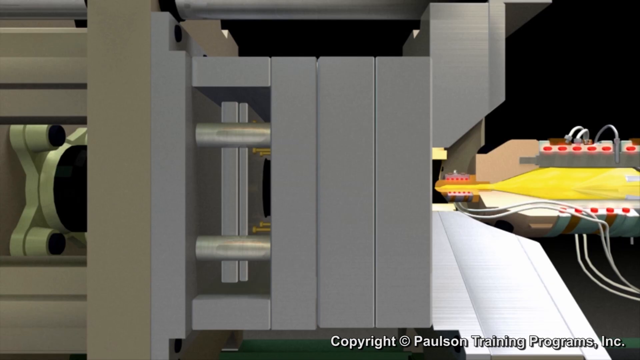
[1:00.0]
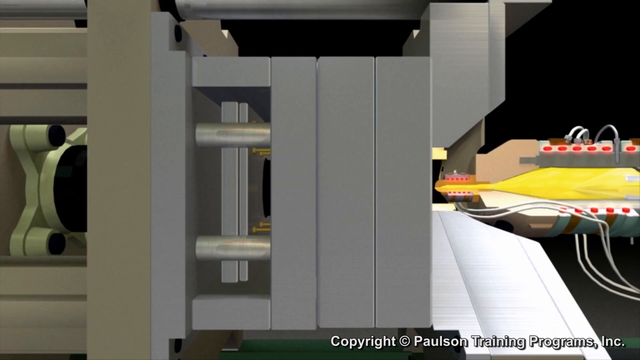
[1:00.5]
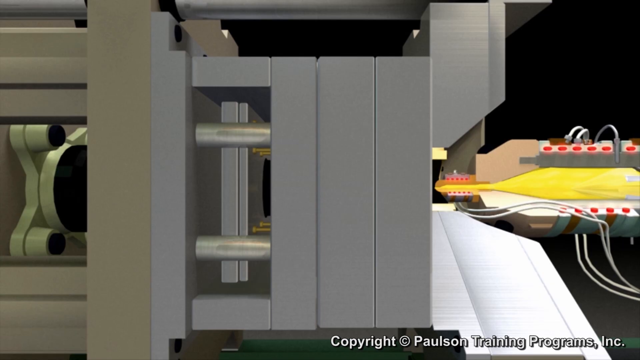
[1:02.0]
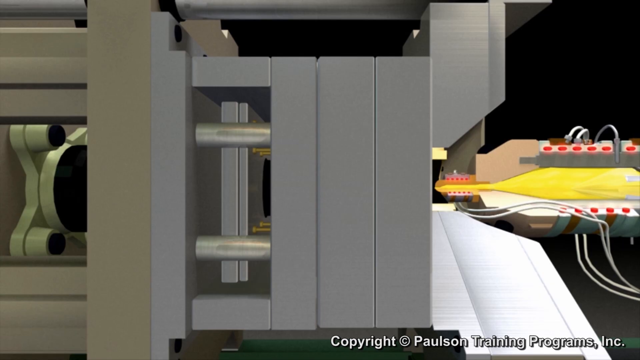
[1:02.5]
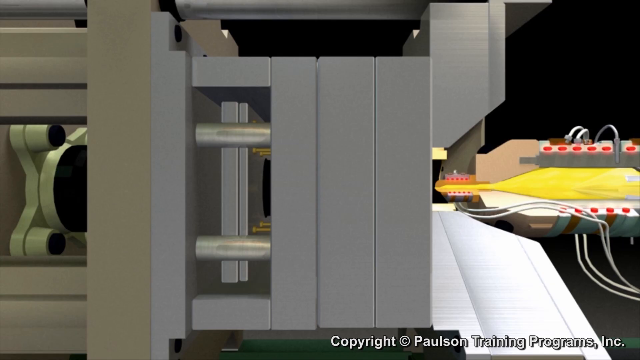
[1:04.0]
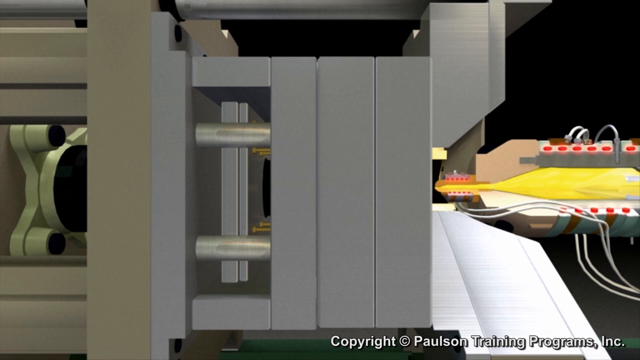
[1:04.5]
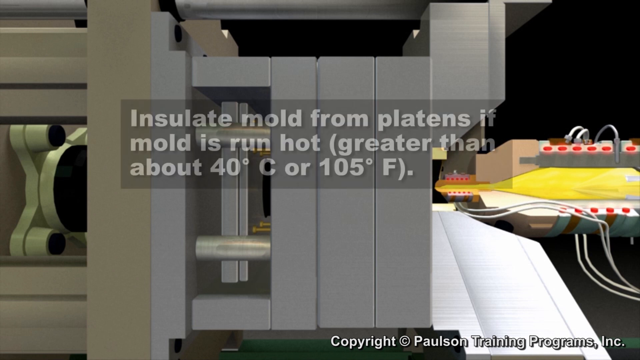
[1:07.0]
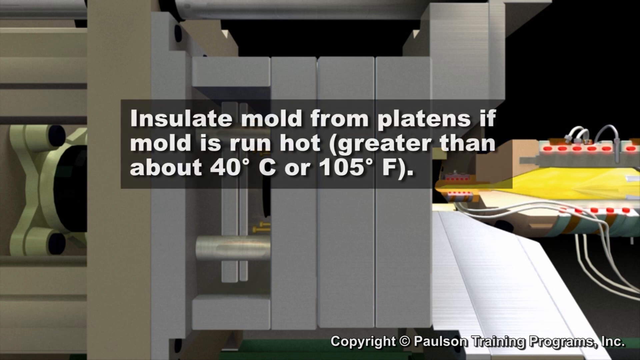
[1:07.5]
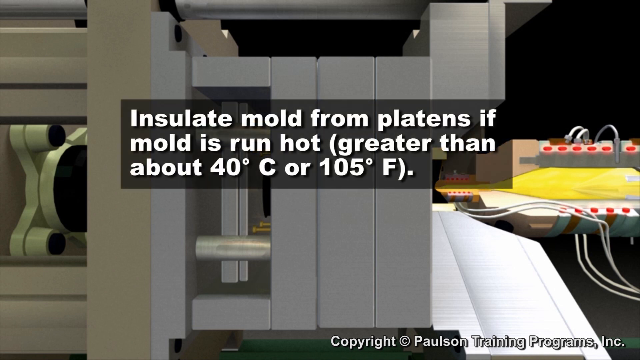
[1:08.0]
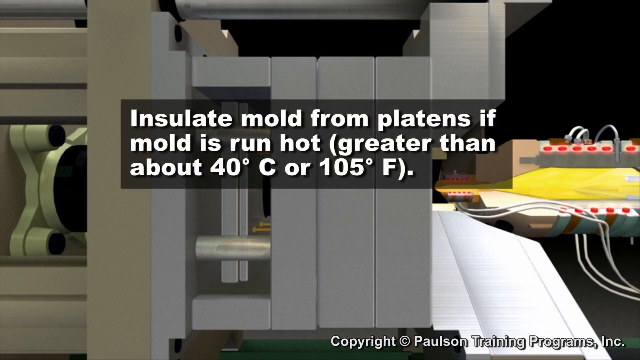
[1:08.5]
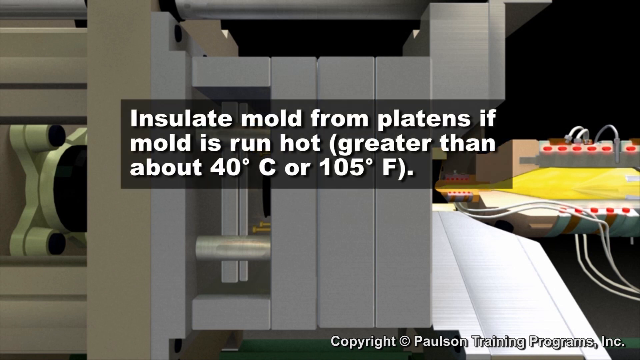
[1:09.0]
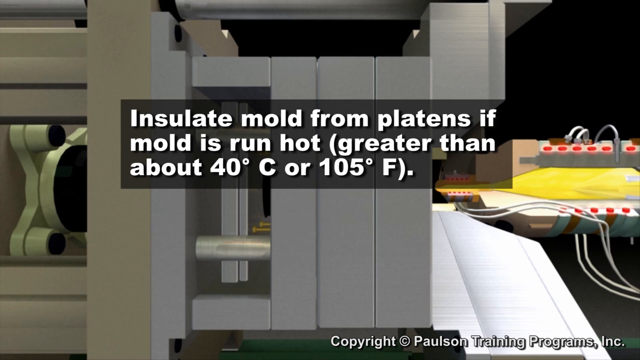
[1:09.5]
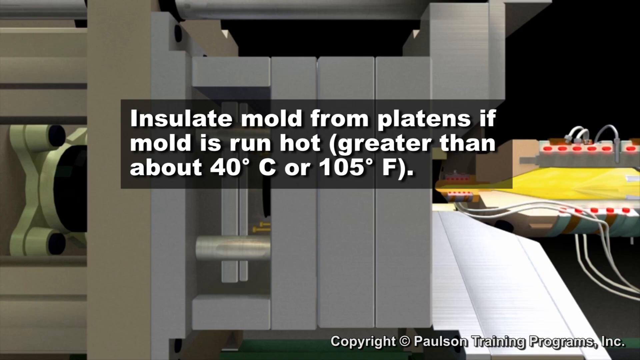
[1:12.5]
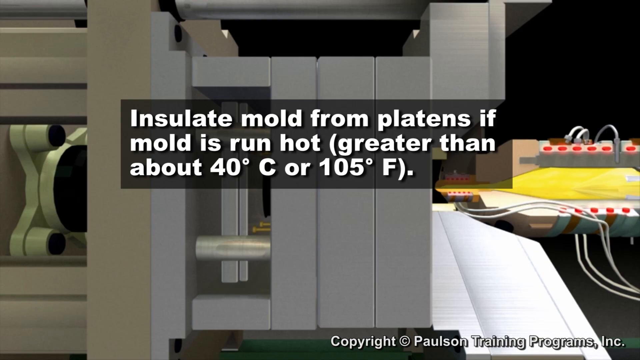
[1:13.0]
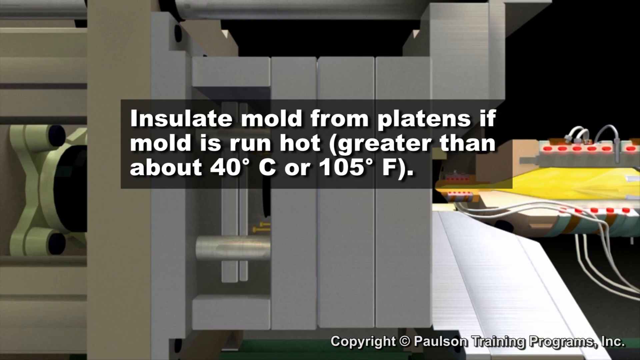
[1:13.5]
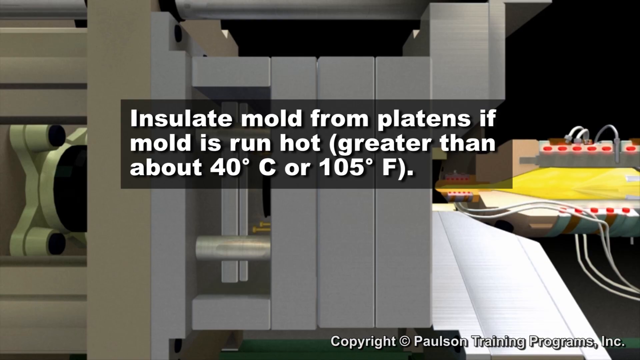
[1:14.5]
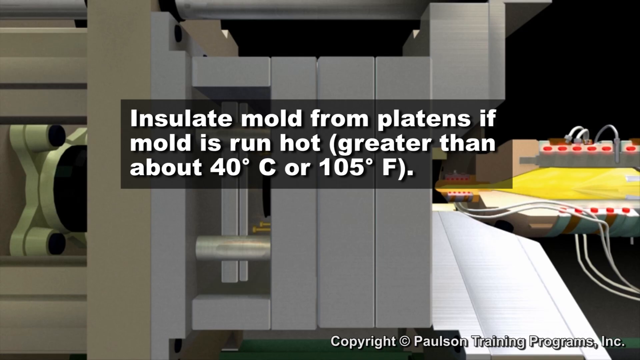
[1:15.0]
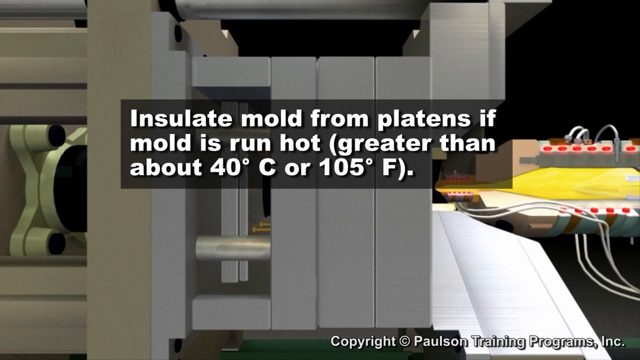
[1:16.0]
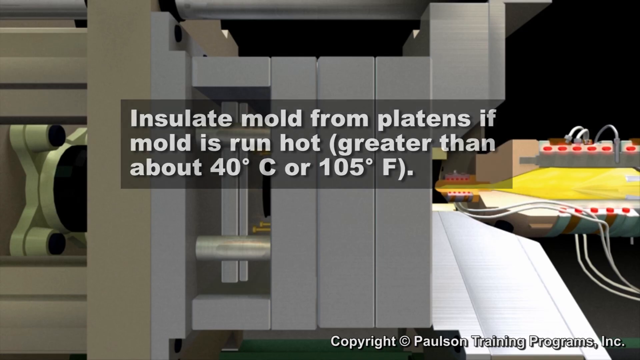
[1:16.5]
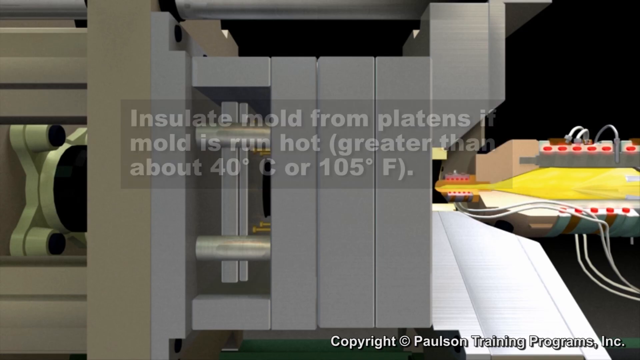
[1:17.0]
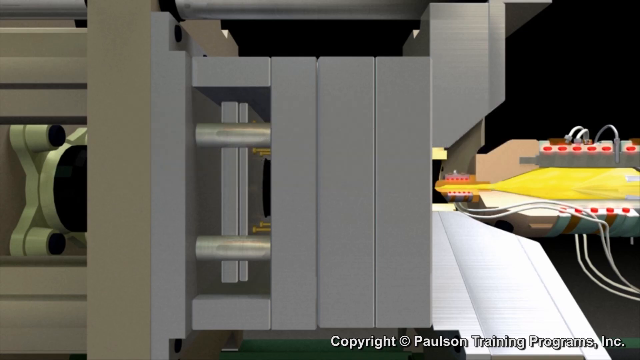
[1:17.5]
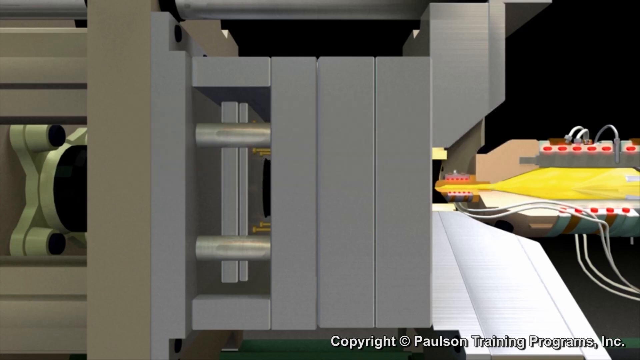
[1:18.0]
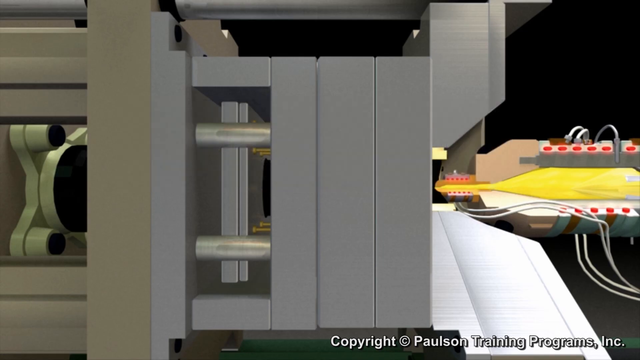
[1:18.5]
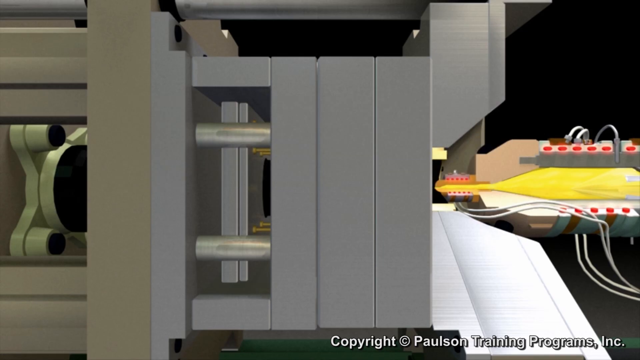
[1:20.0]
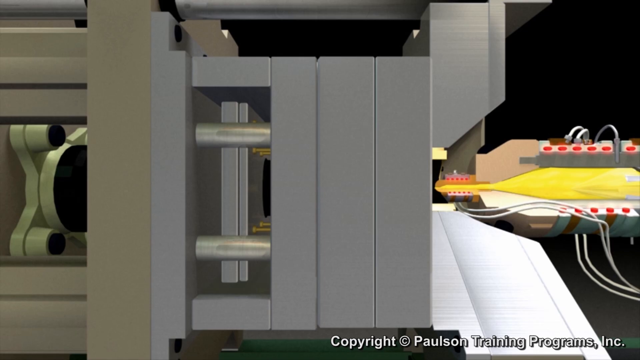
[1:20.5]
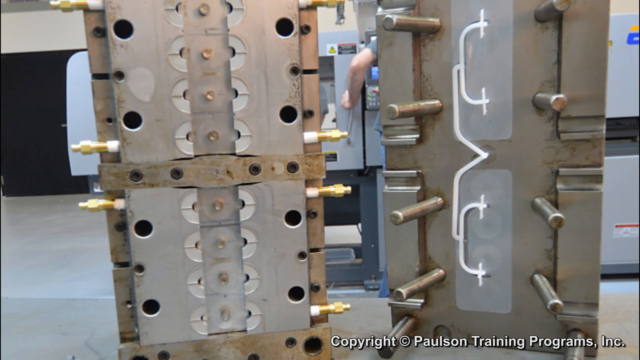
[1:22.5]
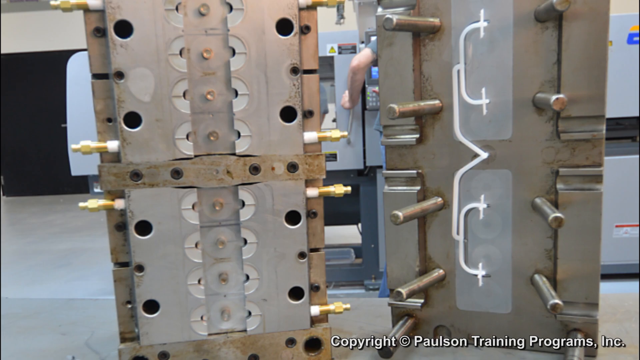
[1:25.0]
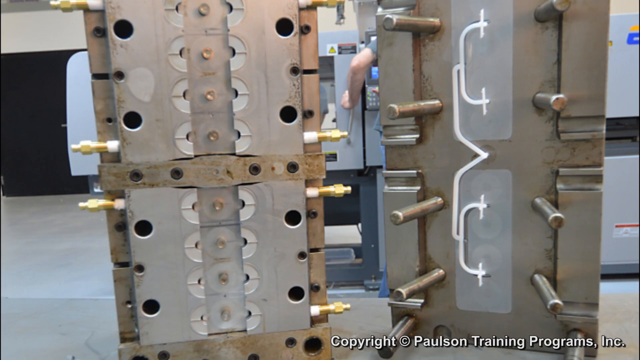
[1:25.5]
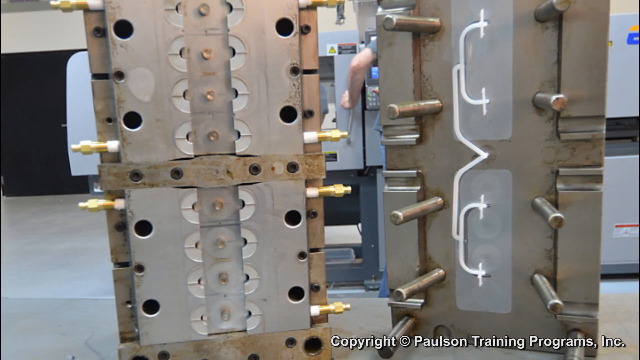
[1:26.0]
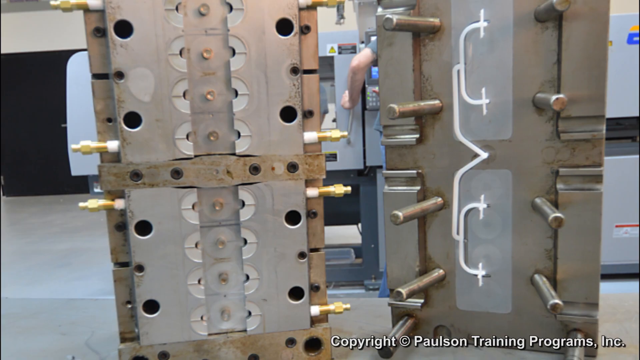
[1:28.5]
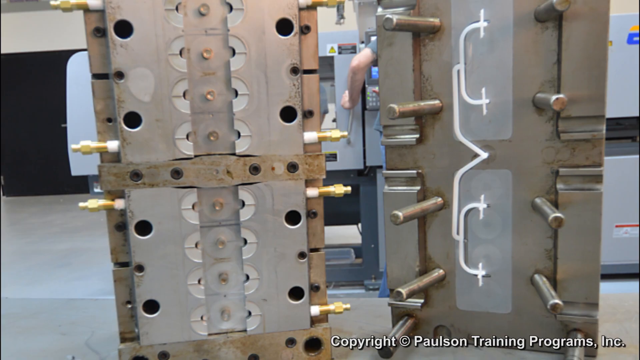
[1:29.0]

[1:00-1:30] Both halves of the injection mold device are together, apparently cooling the molten substance. A text graphic is superimposed over the mold device reading "insulate mold from platens if mold is run hot", with a parenthetical defining this as greater than about 40 degrees Celsius or 105 degrees Fahrenheit. The text fades away, leaving the mold device. The video then cuts to a real-life photograph of such a mold device: a large metal device that appears to be semi-open. Only the arm and elbow of a white man who appears to be working on it are visible near the center of the screen; the rest of him is obscured by huge metal slabs with posts, apparently allowing them to lock up with another slab. On the left is a huge metal slab, a vertical rectangle with eight evenly spaced holes near its sides. On the right is another huge slab with what appears to be a different but still smooth surface and eight posts aligned to fit into the holes of the left slab; it also has what appear to be white rods attached in the middle. The floor is gray, the background further back is black, and the ceiling appears to be gray or an off-white tan color.